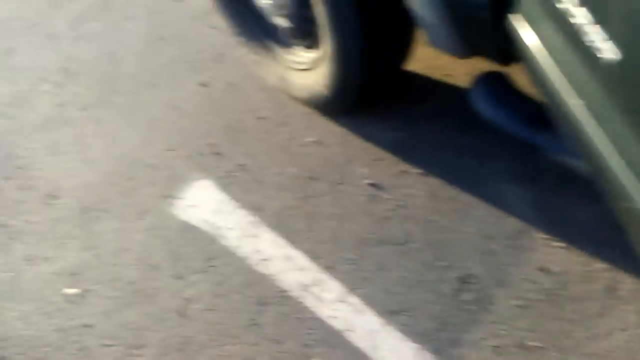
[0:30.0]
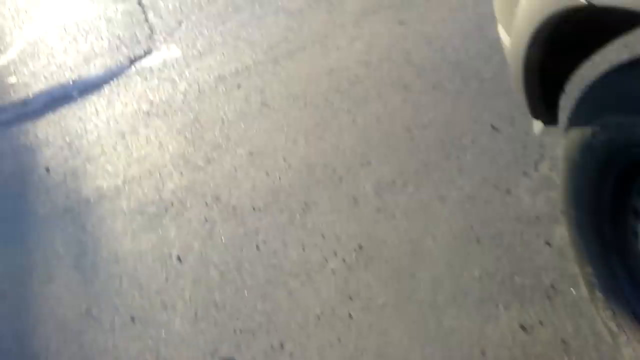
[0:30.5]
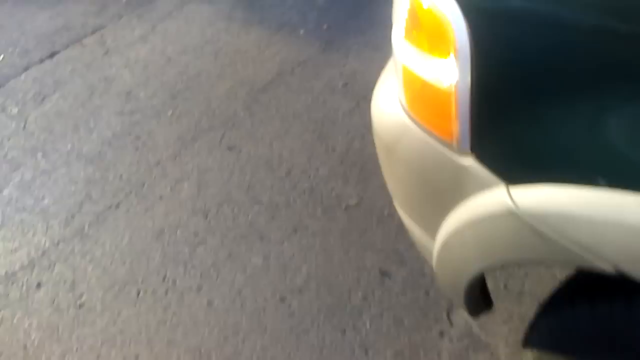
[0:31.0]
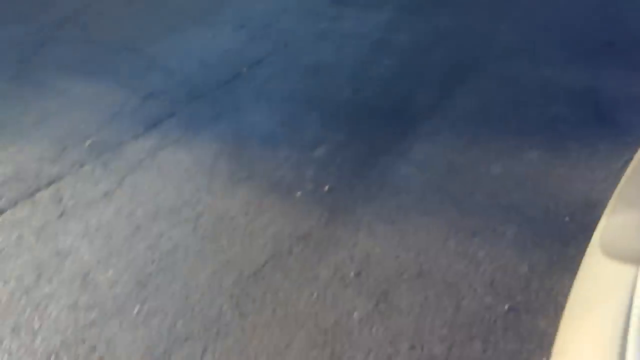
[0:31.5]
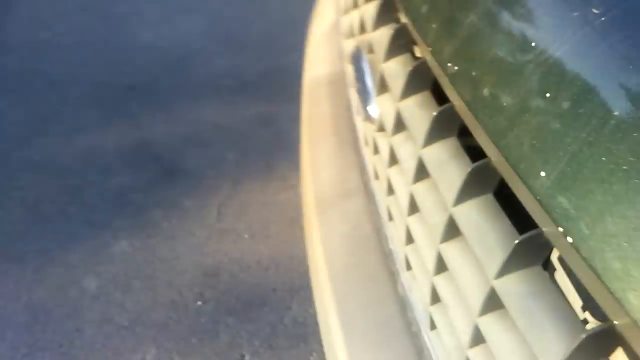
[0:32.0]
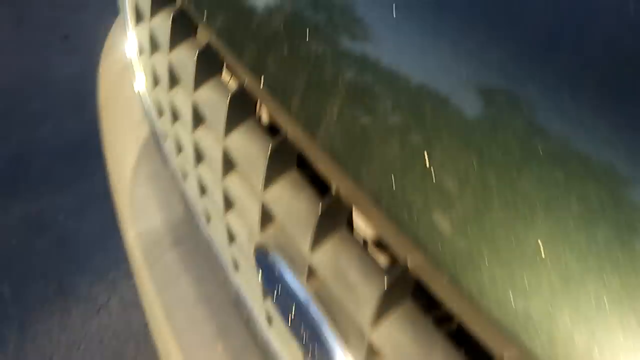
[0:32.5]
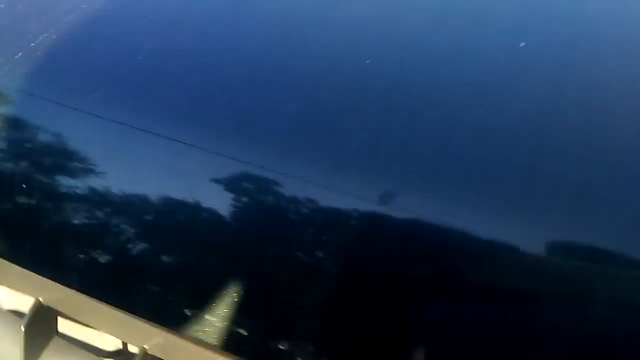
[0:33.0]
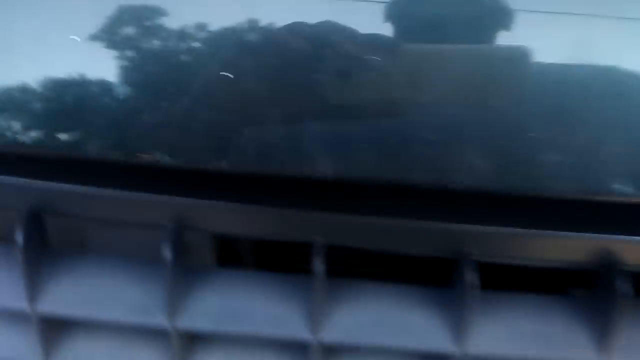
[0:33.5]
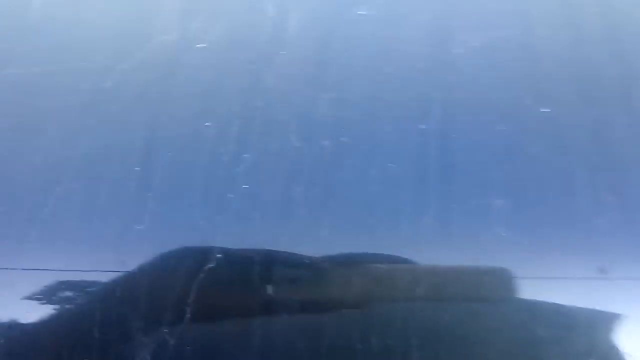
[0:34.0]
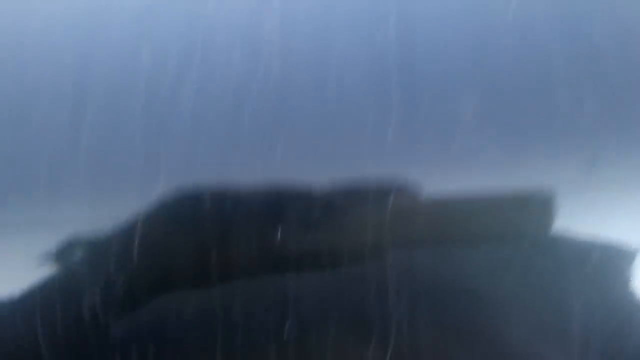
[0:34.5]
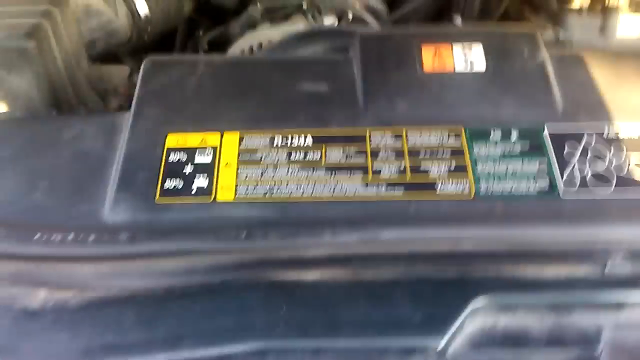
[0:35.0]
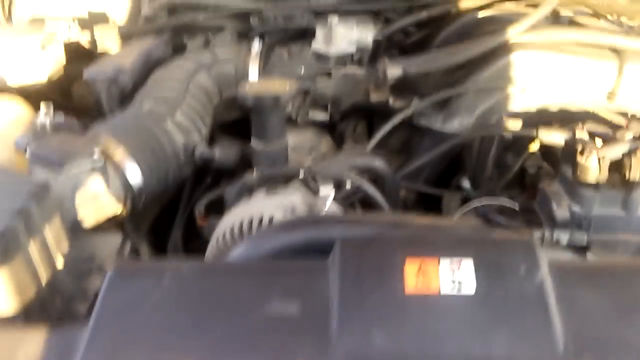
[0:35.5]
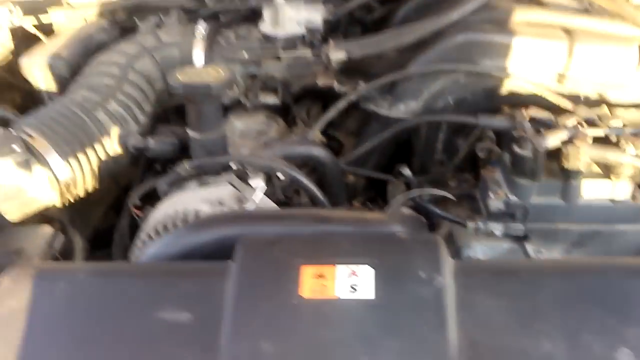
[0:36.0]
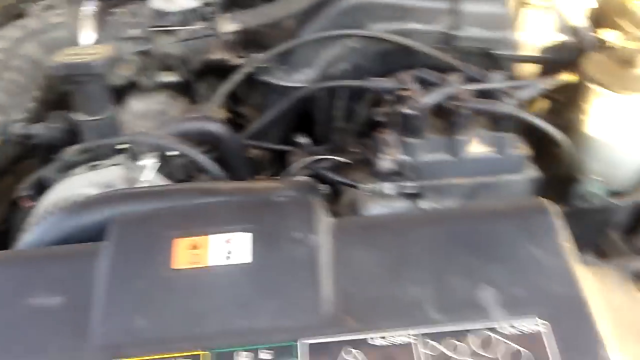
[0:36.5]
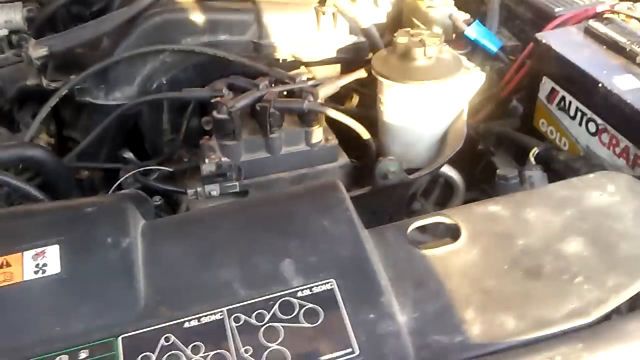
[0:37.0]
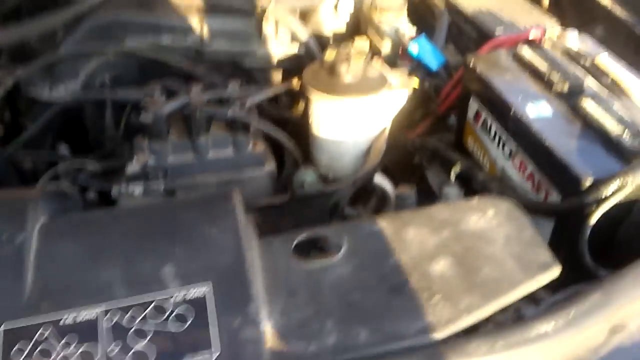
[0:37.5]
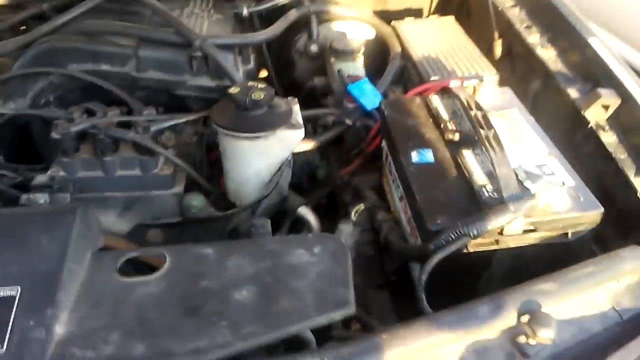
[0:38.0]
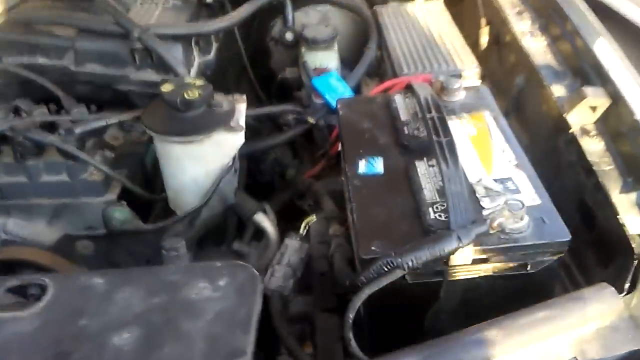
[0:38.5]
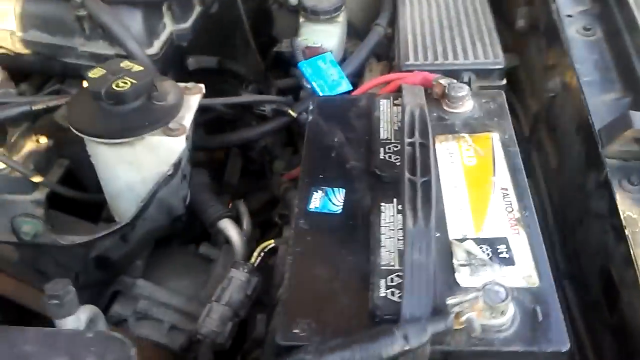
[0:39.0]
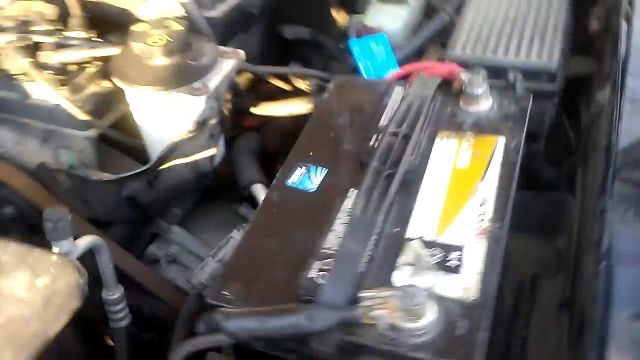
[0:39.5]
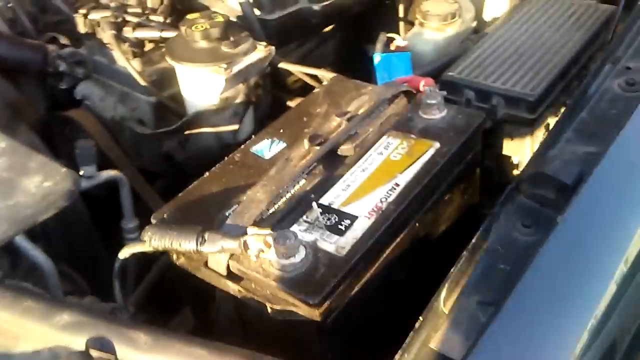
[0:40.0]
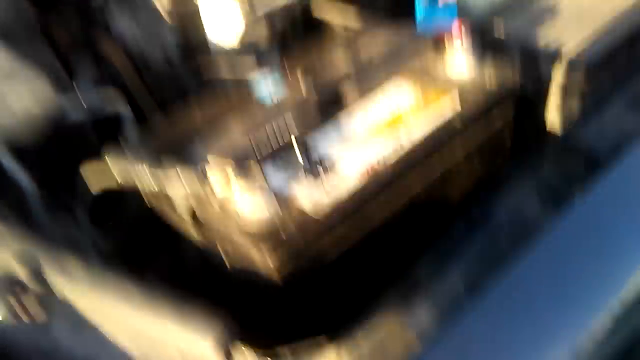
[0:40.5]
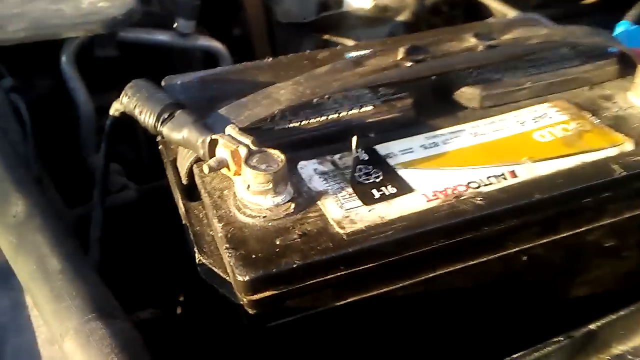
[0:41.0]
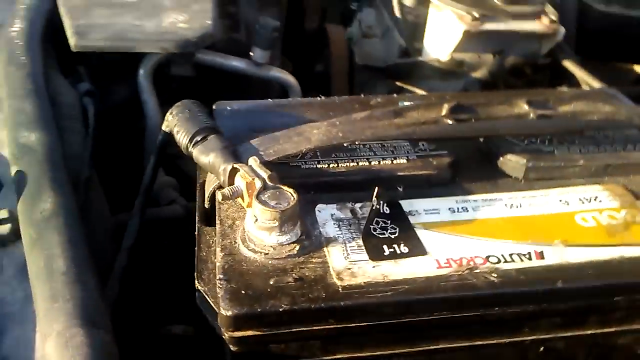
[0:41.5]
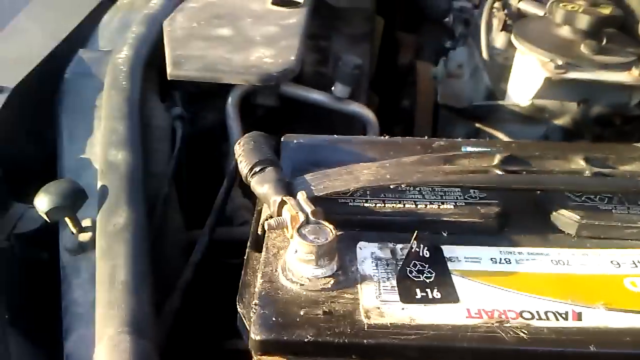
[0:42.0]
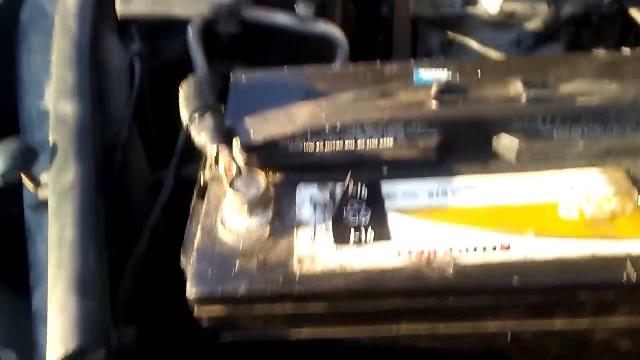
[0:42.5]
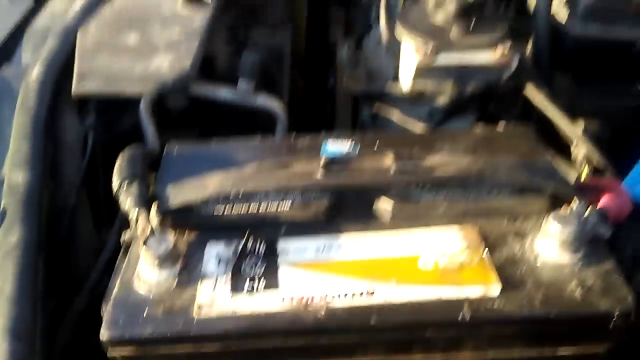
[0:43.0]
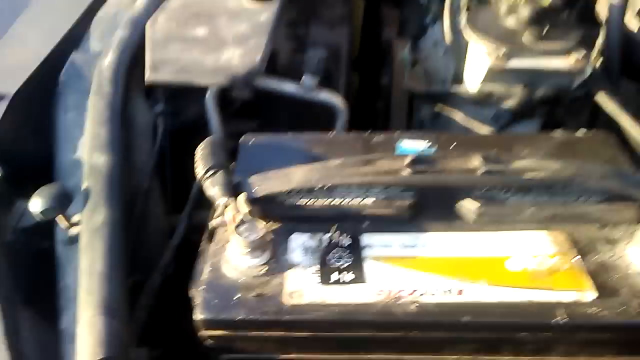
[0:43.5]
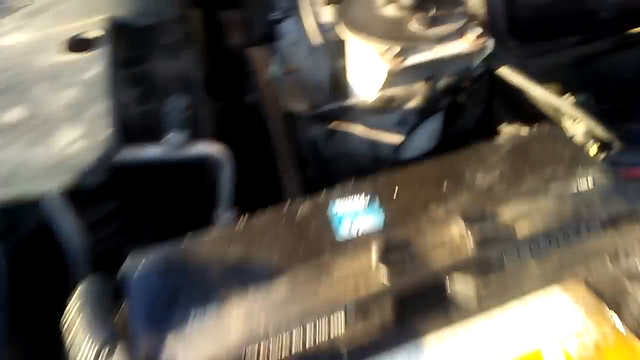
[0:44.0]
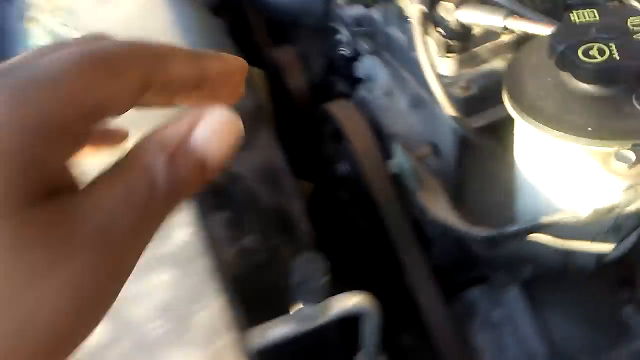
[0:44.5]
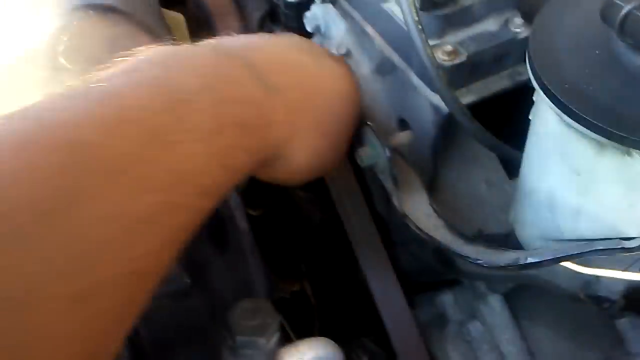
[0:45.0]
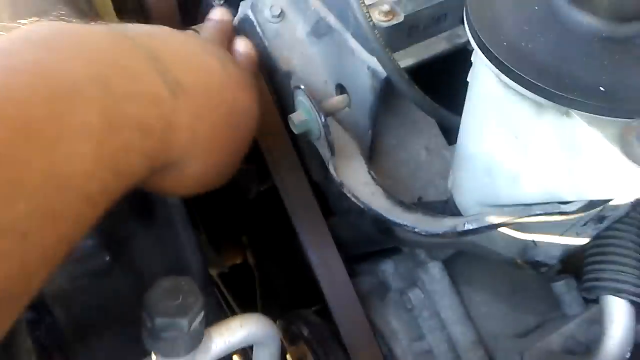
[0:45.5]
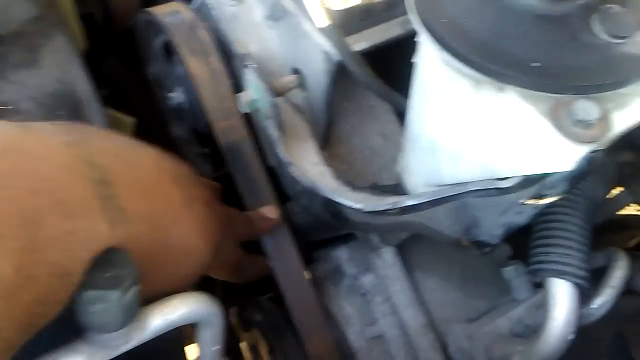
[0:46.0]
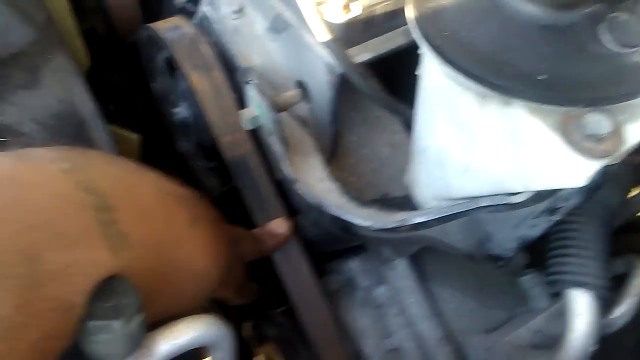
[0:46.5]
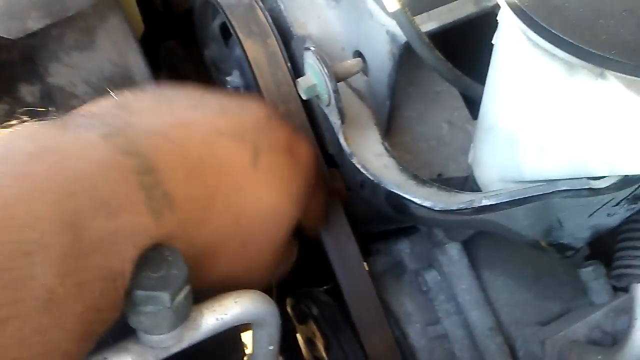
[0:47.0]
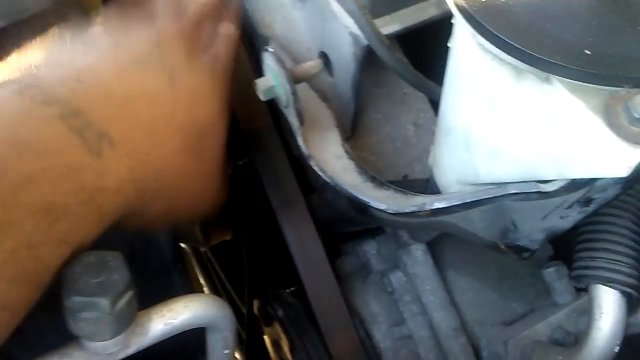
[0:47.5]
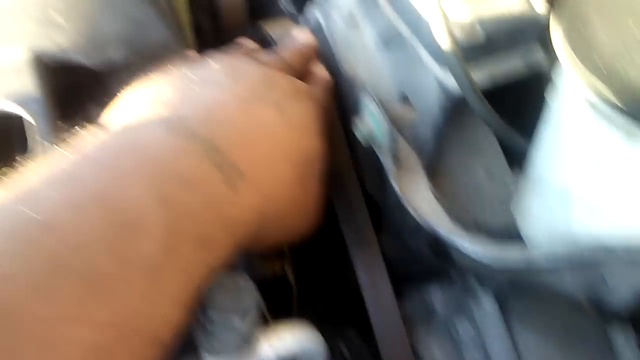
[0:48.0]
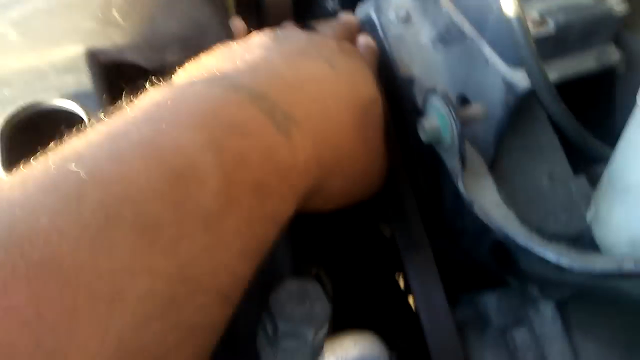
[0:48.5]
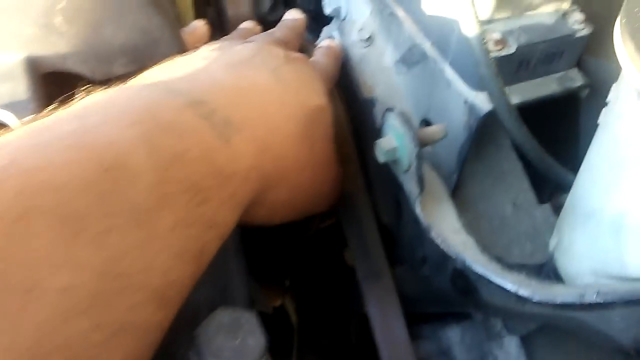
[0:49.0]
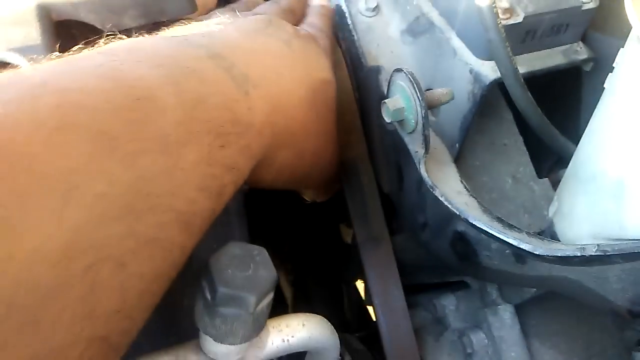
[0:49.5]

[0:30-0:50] The driver's side tire of the car is visible along with the asphalt ground, which has a white line marking on it. The camera moves past to the front, showing the grille of the car, which is a deep olive green. A reflection on the hood looks like a person. The hood is then opened and lifted up, revealing the engine compartment with various engine parts and connecting wires and cables. The camera pans to the right to a white compartment: a white cylindrical part in the middle with a black round cover that looks like the power steering or brake fluid compartment. The battery is in the lower right corner, with a red cable connected to one battery head and a black cable connected to the other. There is a white sticker with a yellow streak on the black battery. The camera focuses on the top of the battery, and then a person's hand reaches toward the fan belt area and touches the fan belt as if checking for tension, patting it.